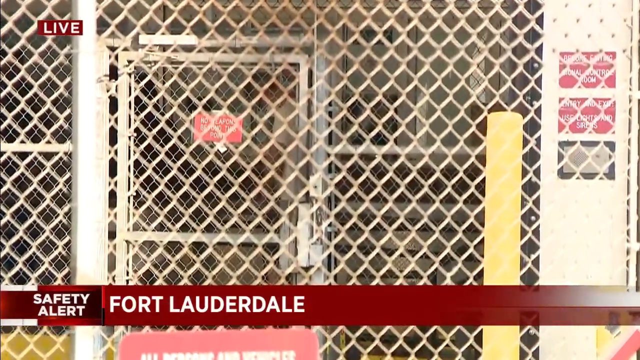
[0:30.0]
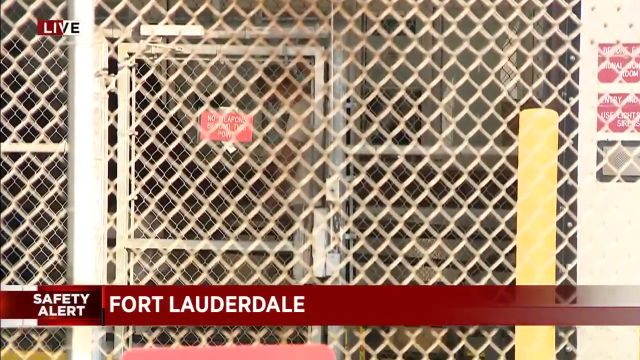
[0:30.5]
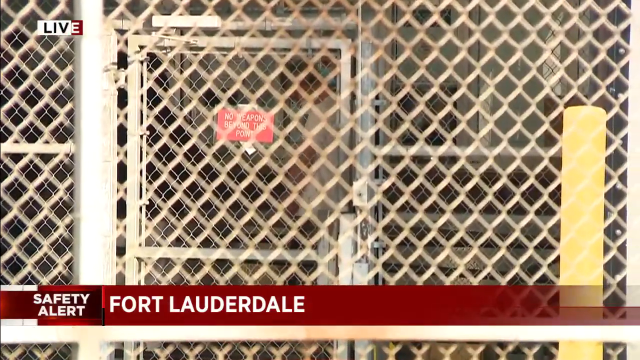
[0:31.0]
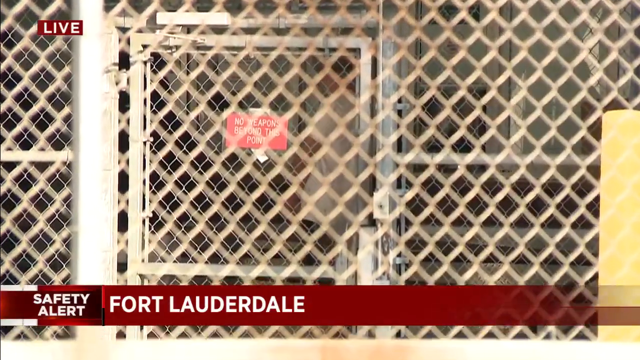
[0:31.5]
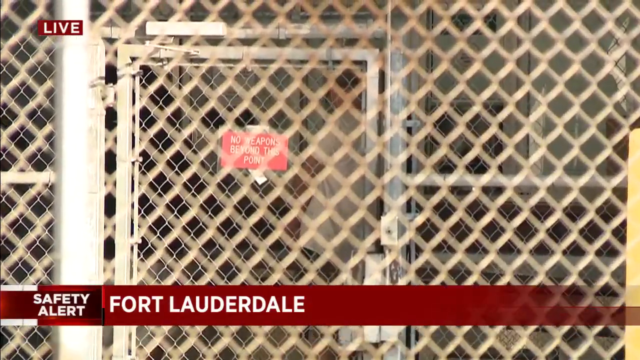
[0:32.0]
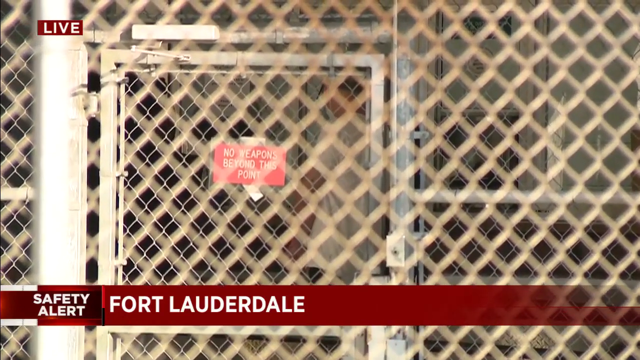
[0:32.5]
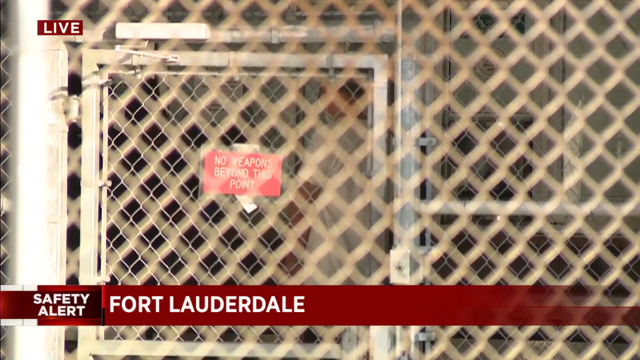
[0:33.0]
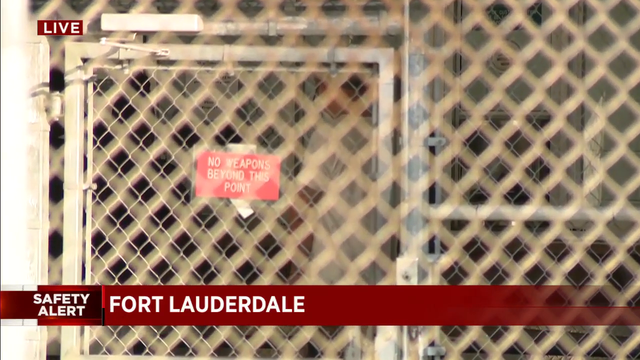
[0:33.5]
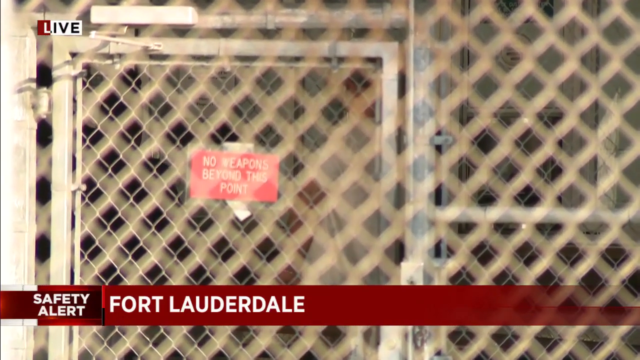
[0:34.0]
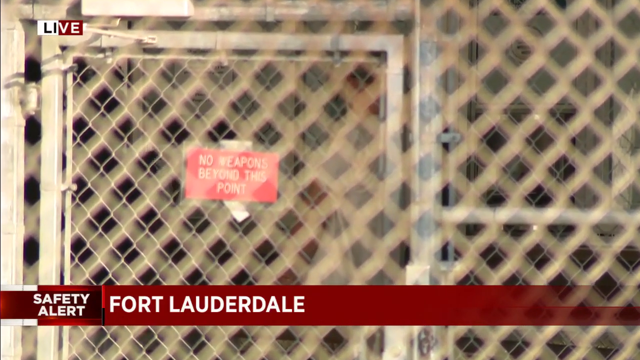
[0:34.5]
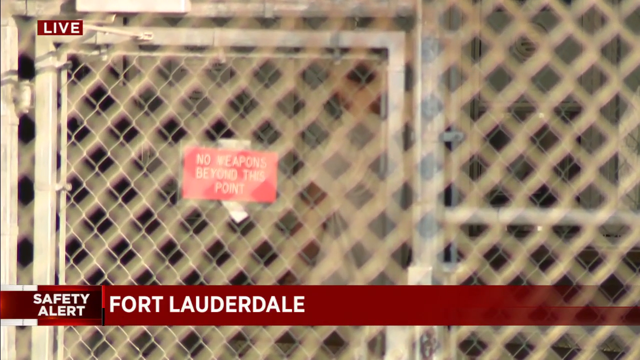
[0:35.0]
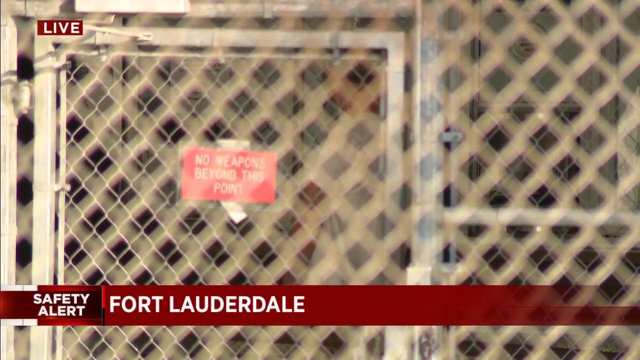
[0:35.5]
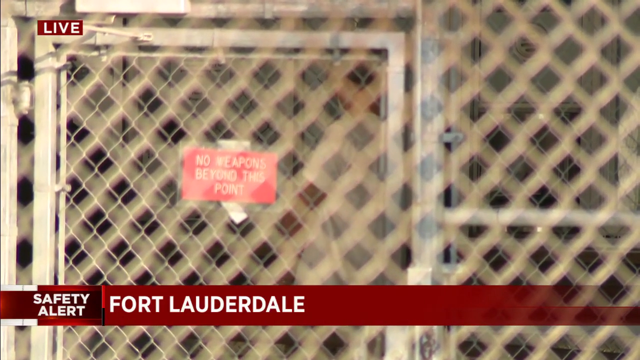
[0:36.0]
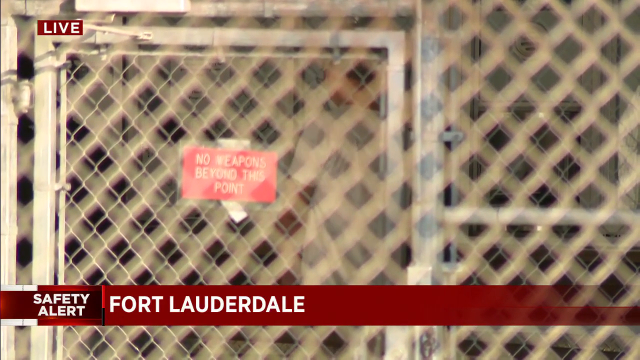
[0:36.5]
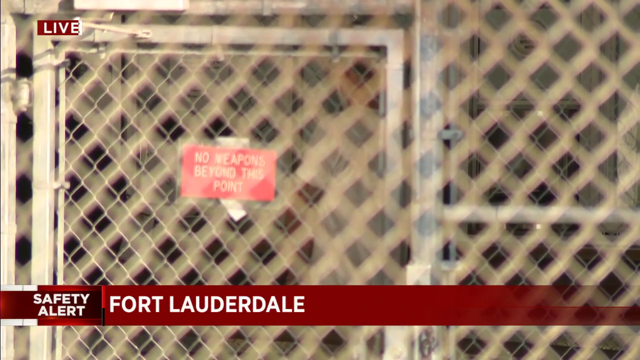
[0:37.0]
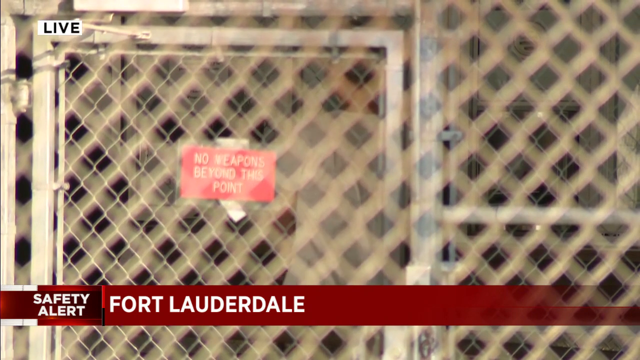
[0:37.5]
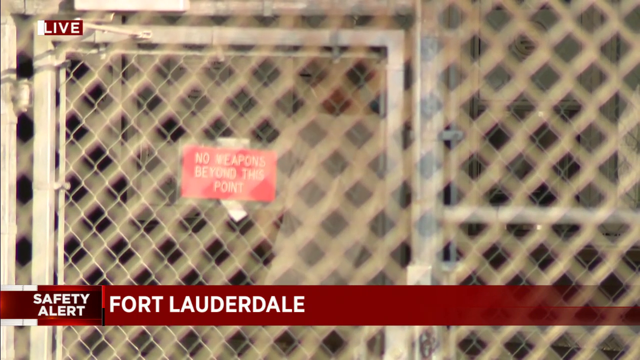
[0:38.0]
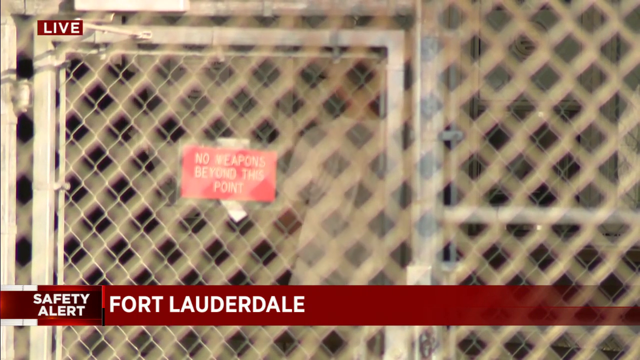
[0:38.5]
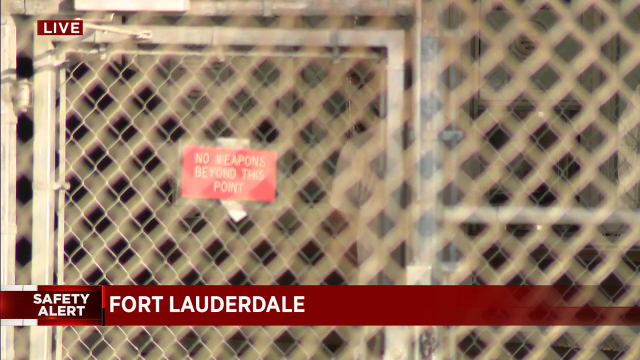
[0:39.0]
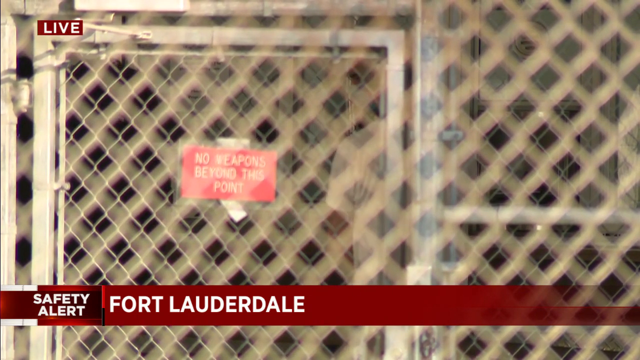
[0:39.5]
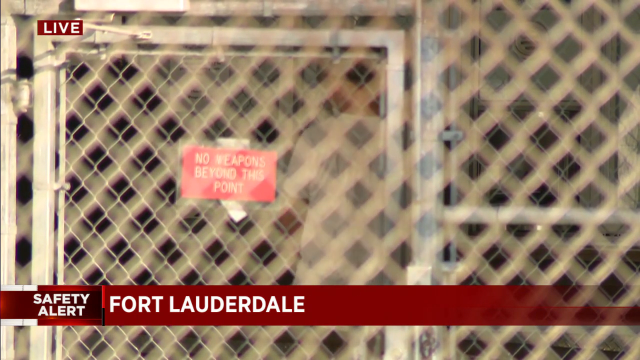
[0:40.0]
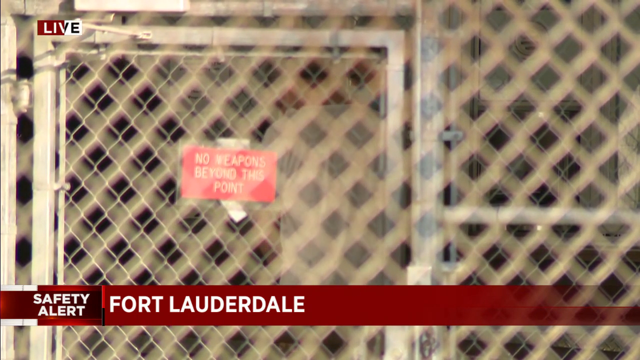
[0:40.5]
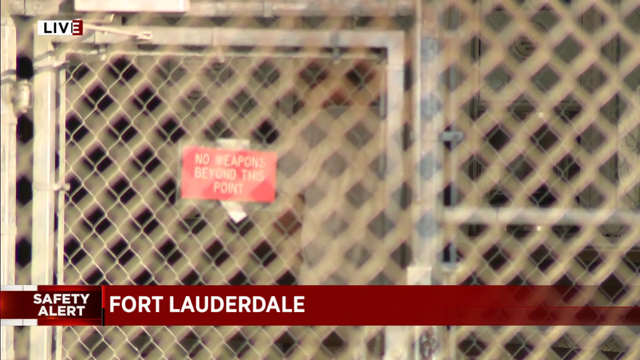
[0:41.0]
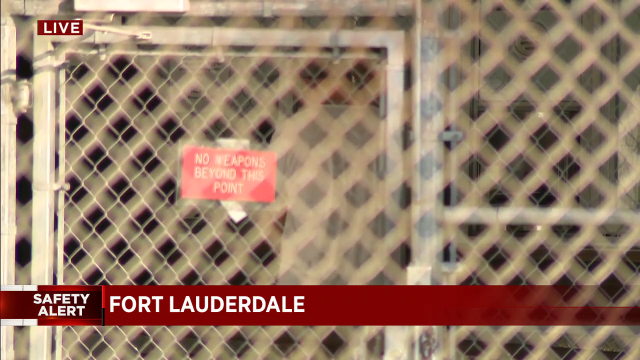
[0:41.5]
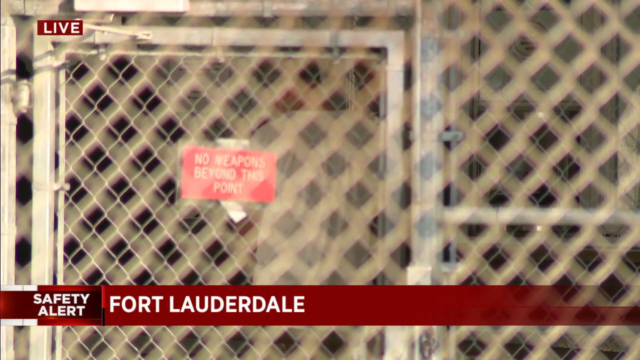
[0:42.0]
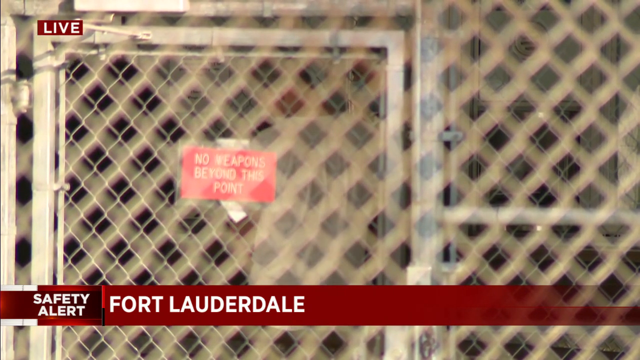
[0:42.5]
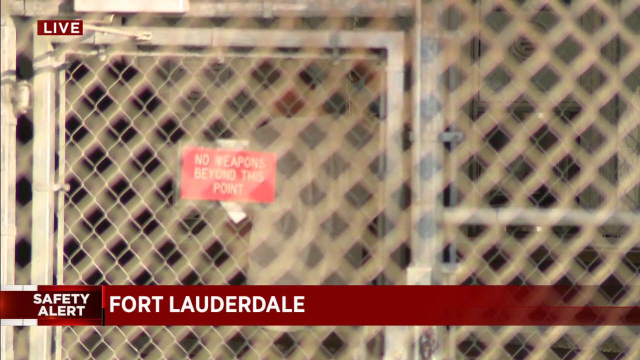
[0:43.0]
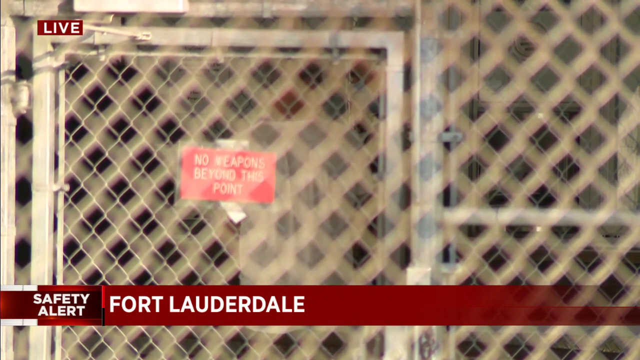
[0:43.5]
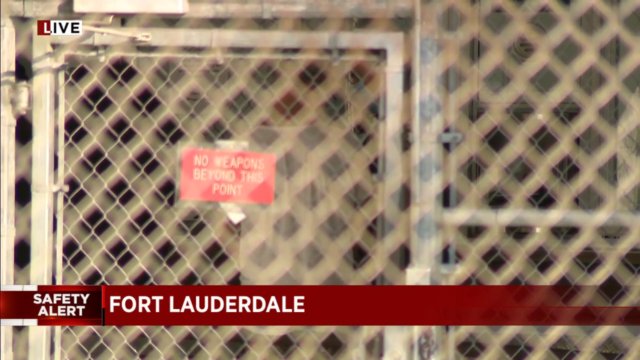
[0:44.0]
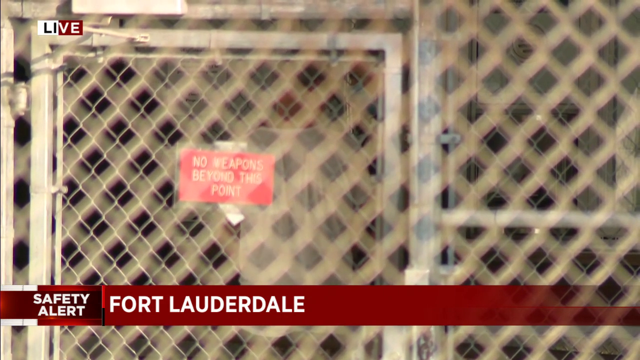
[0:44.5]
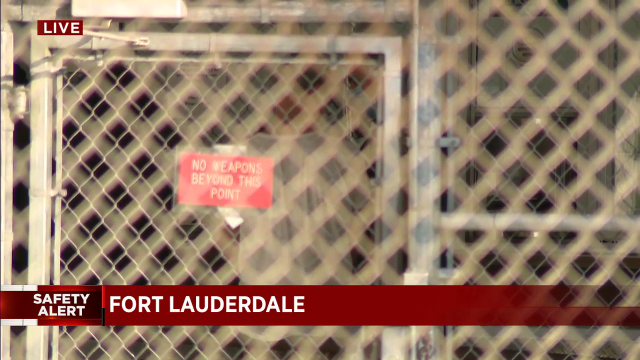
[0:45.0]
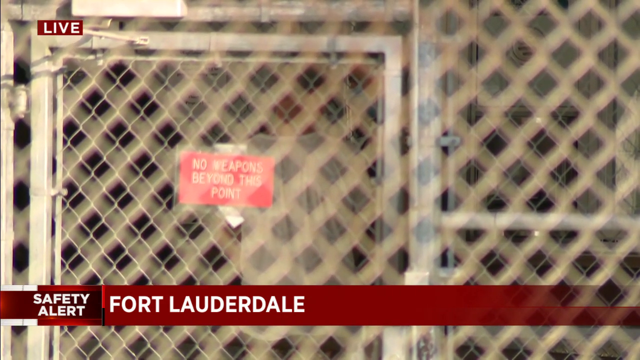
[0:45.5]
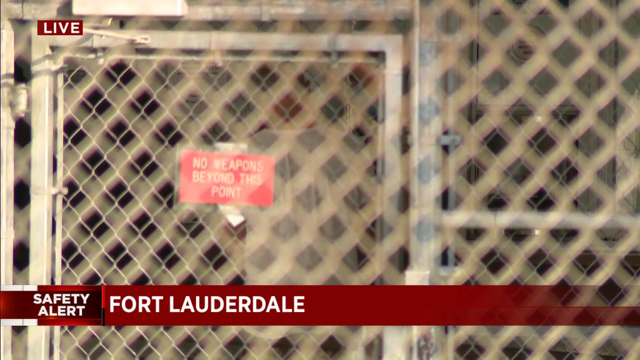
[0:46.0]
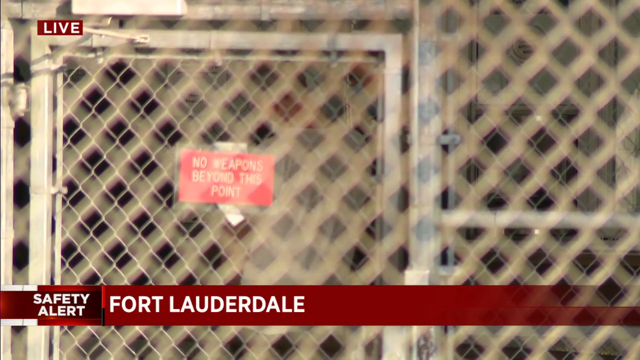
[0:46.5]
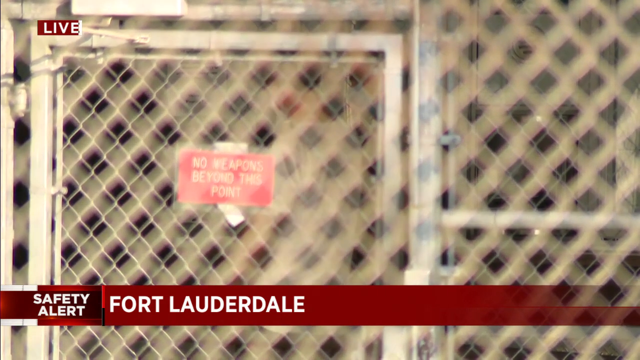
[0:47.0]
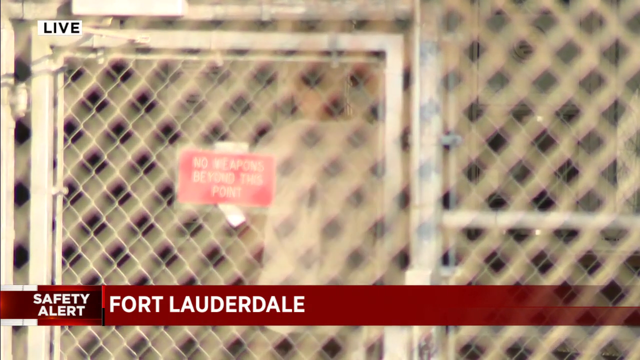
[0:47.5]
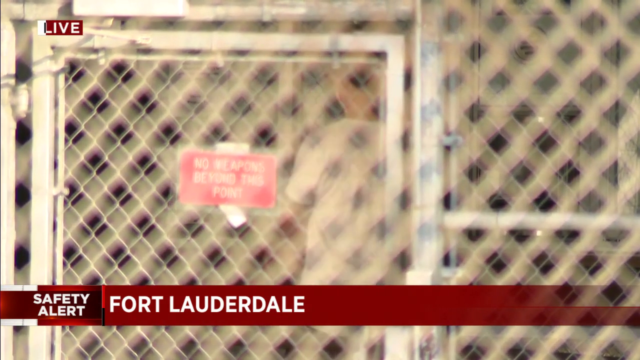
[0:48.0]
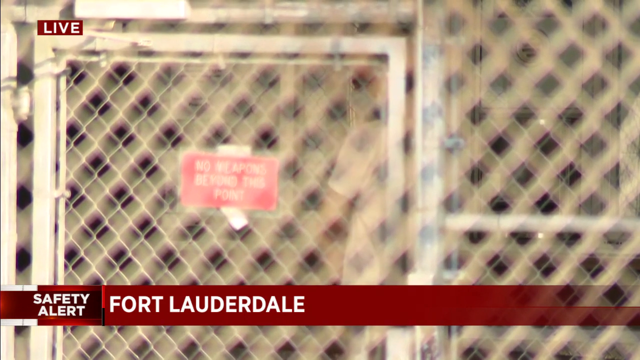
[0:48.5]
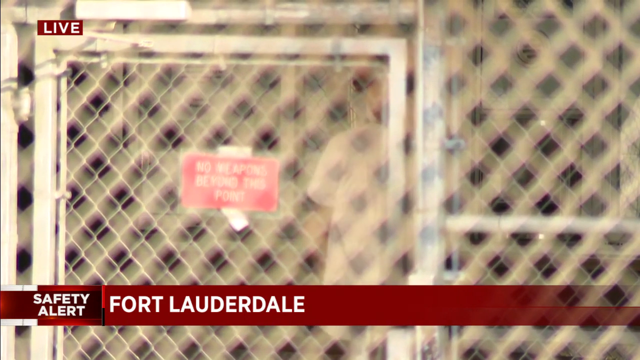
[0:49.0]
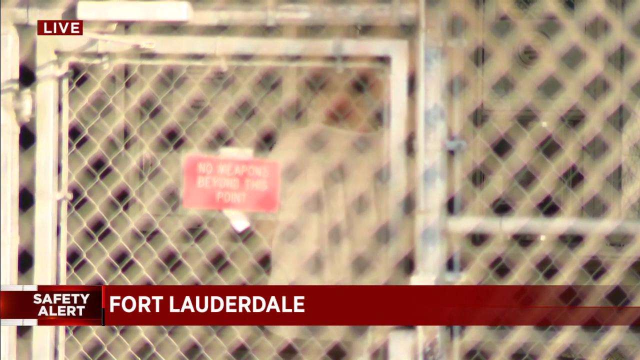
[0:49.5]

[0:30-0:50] The scene shows Cardinal Gibbons High School.